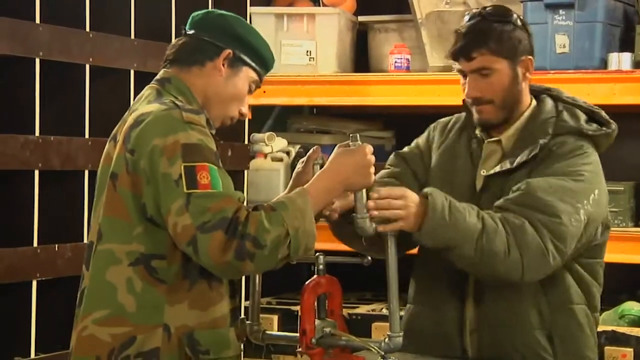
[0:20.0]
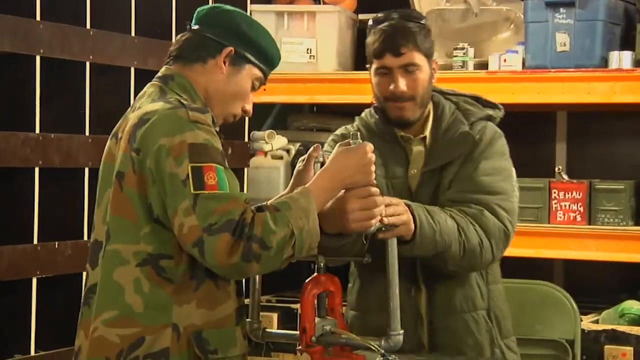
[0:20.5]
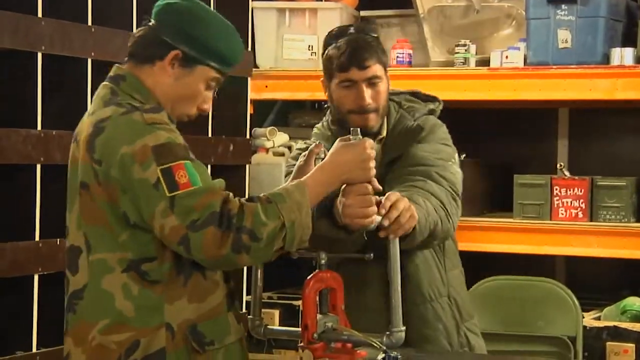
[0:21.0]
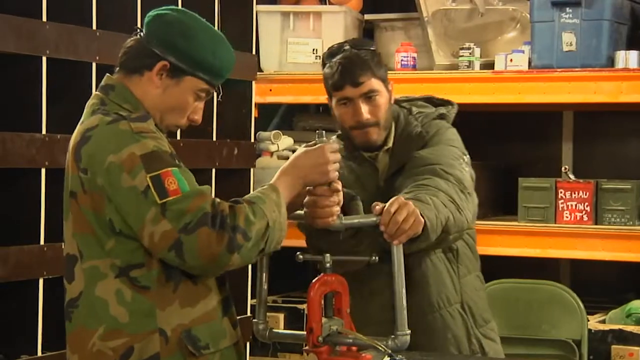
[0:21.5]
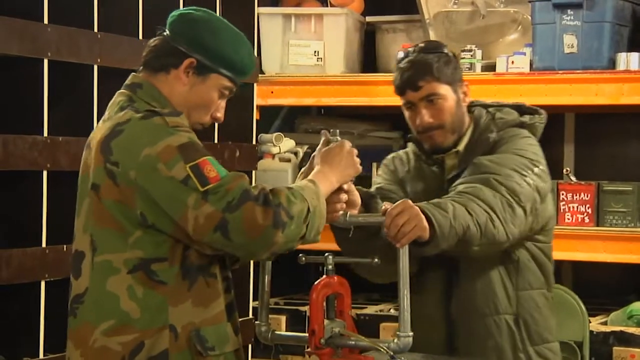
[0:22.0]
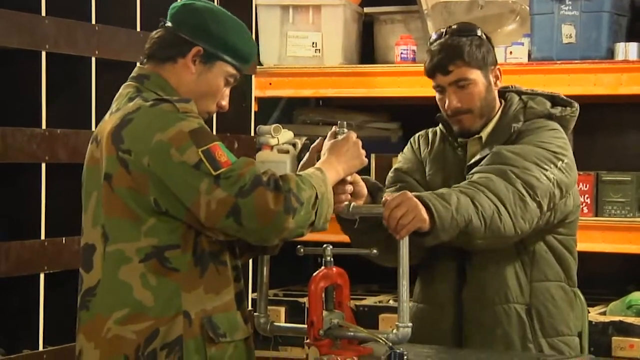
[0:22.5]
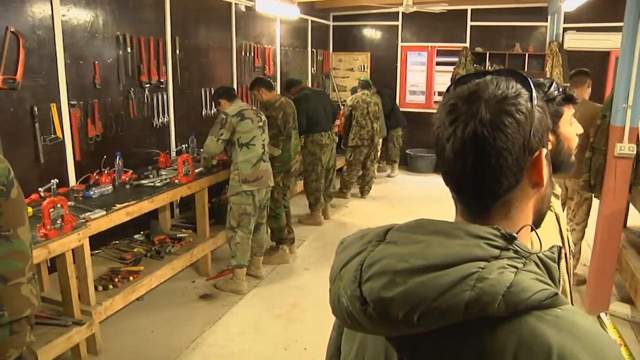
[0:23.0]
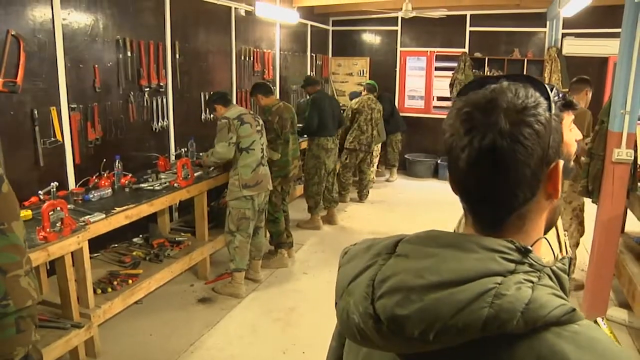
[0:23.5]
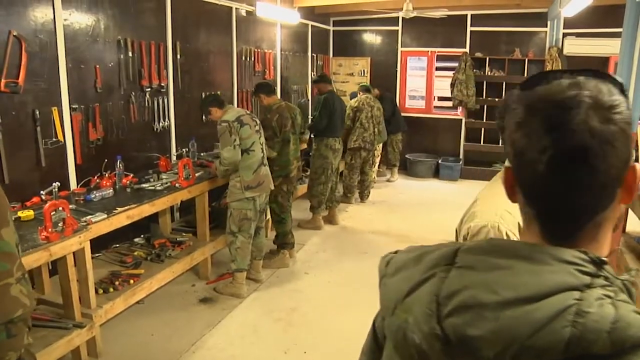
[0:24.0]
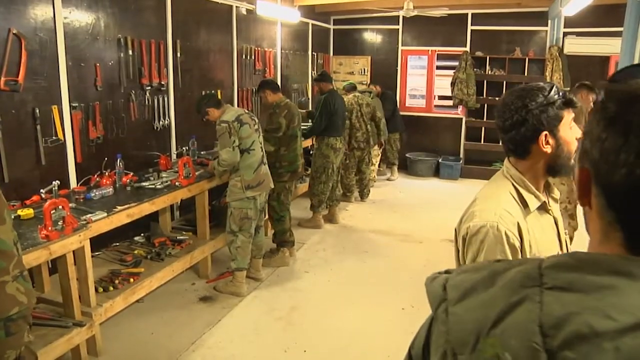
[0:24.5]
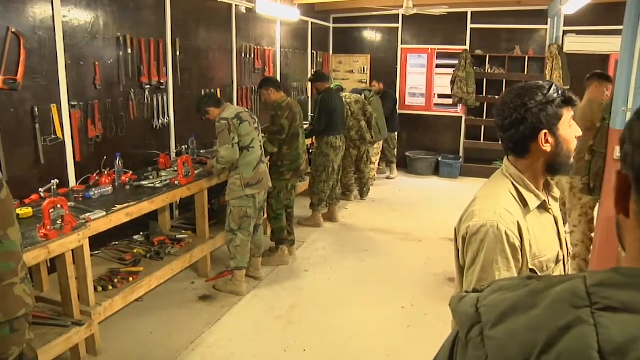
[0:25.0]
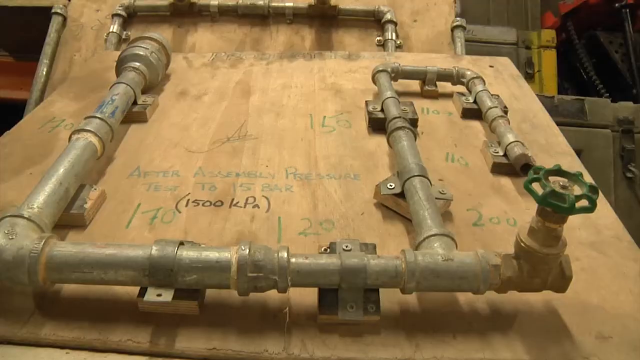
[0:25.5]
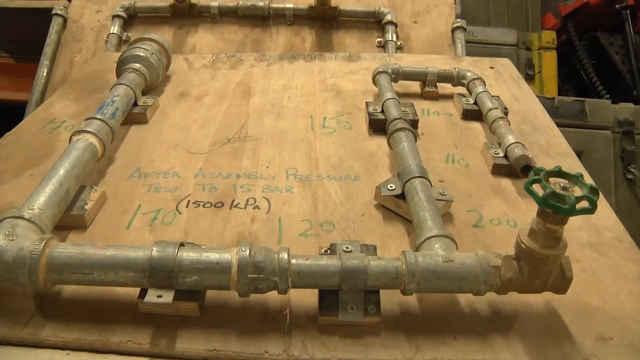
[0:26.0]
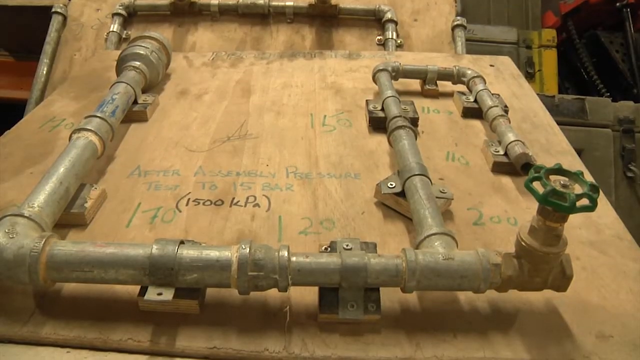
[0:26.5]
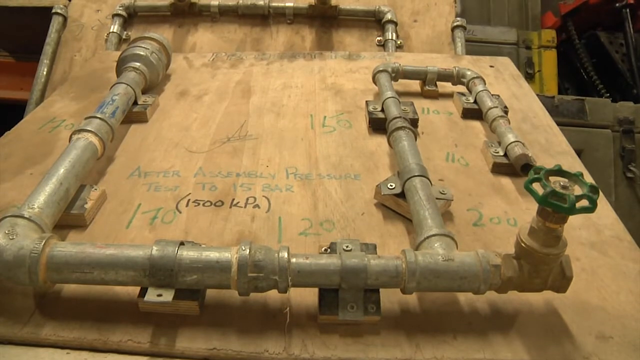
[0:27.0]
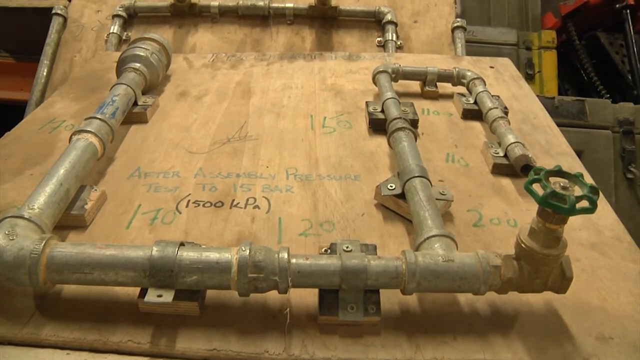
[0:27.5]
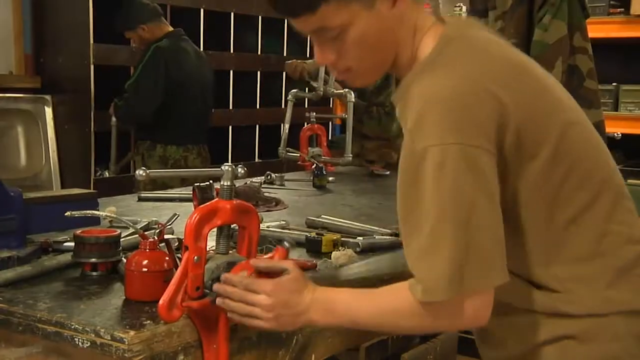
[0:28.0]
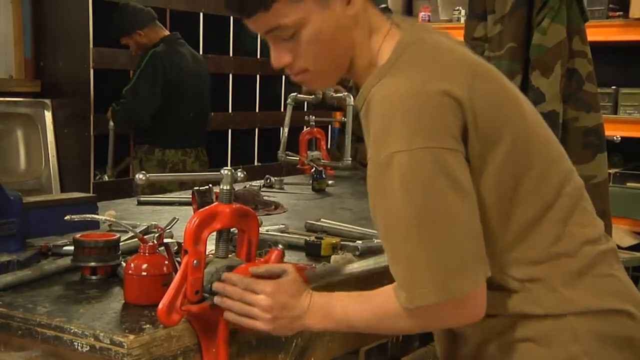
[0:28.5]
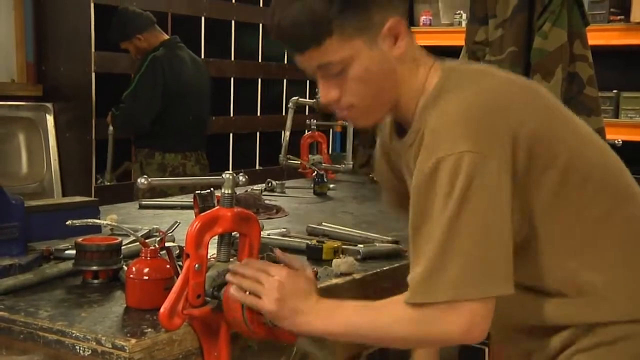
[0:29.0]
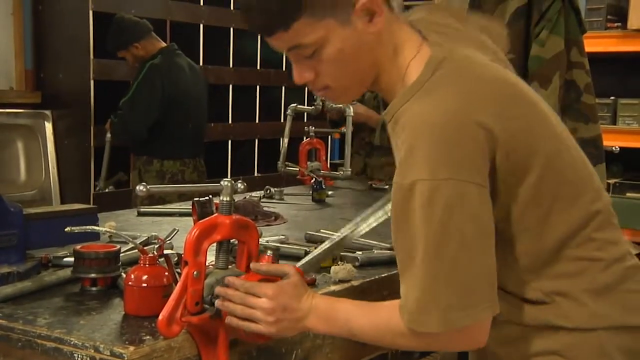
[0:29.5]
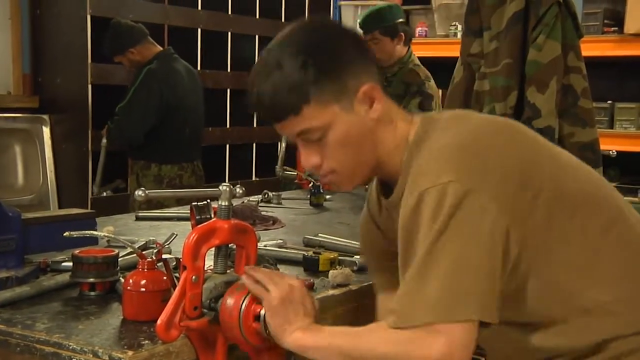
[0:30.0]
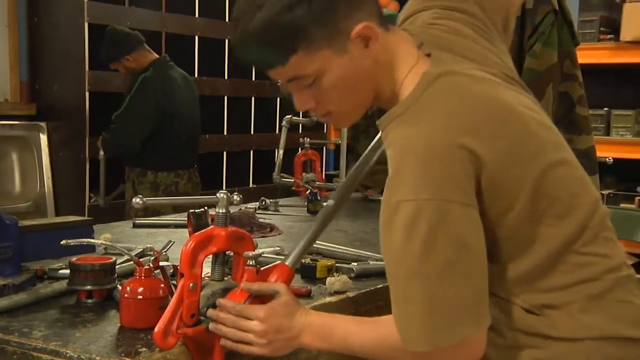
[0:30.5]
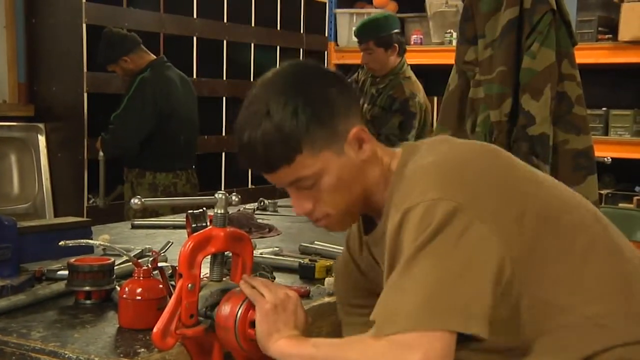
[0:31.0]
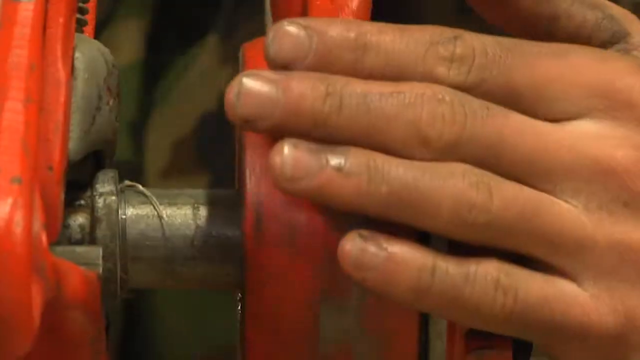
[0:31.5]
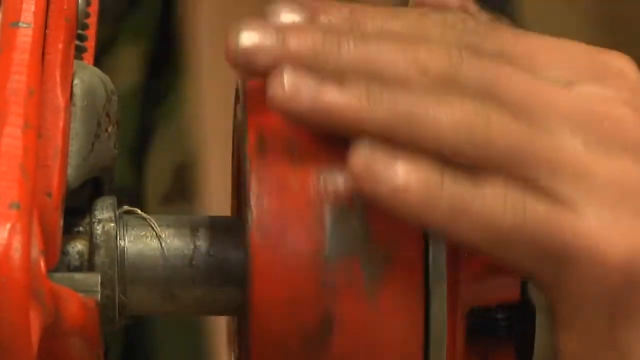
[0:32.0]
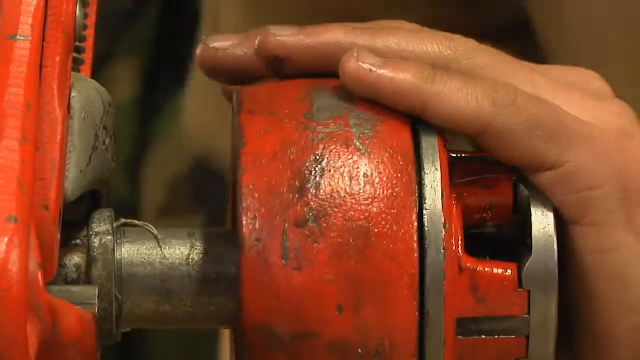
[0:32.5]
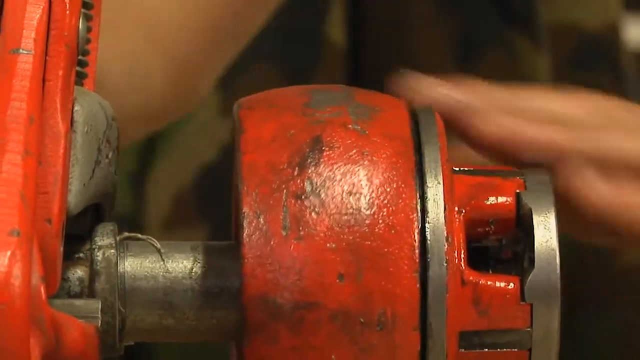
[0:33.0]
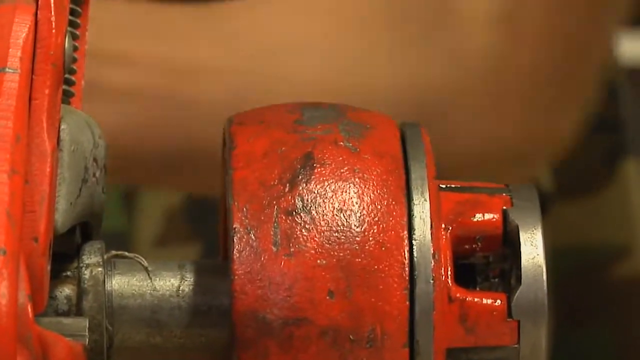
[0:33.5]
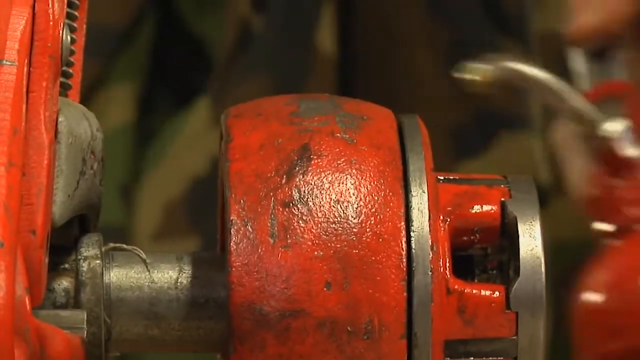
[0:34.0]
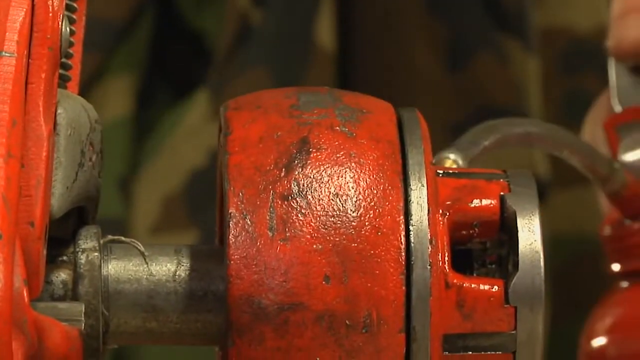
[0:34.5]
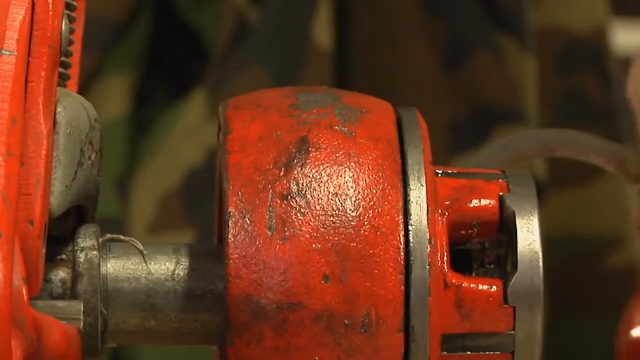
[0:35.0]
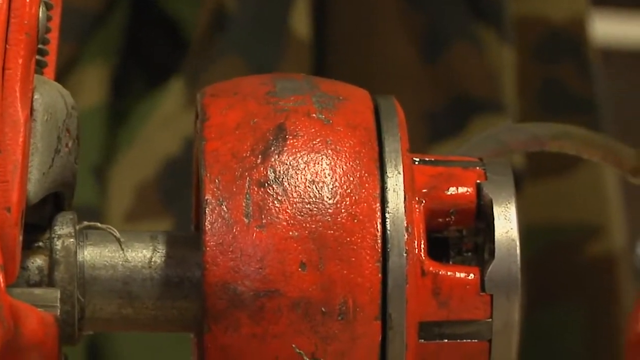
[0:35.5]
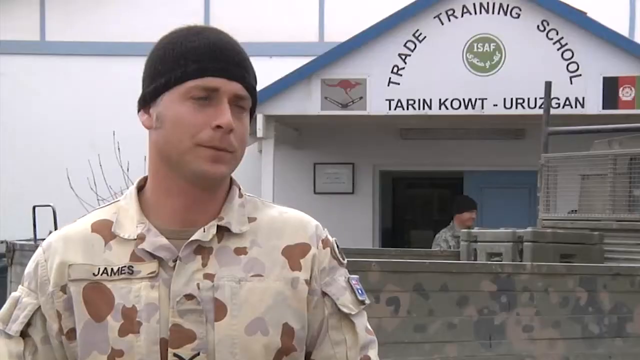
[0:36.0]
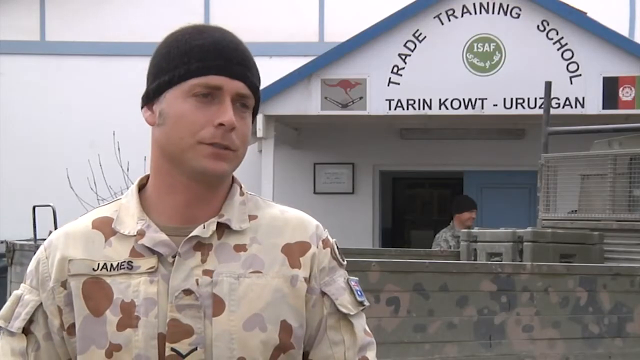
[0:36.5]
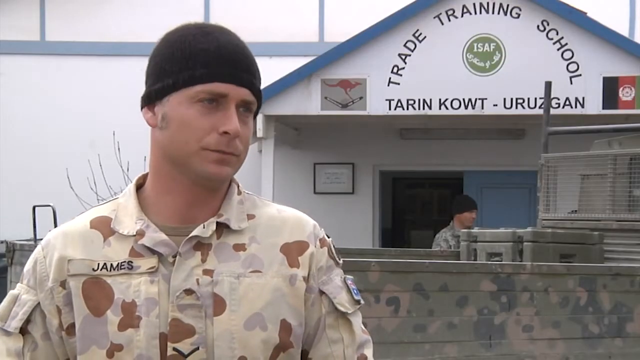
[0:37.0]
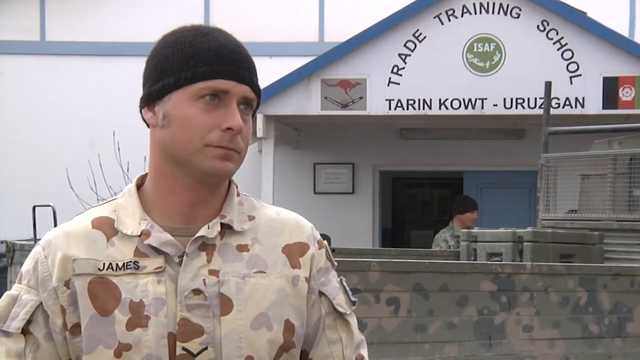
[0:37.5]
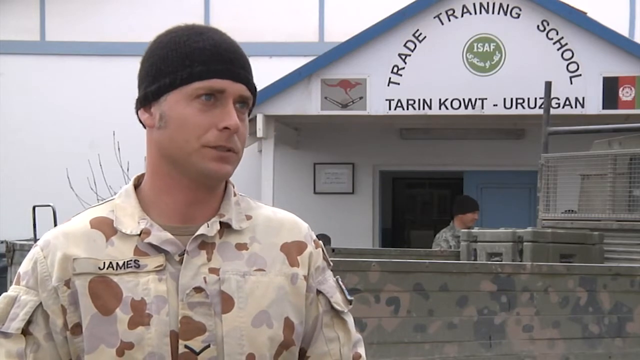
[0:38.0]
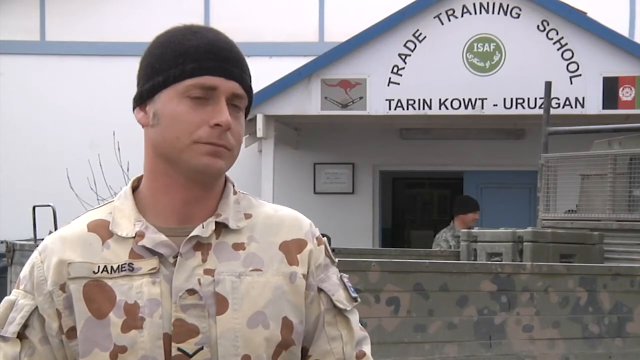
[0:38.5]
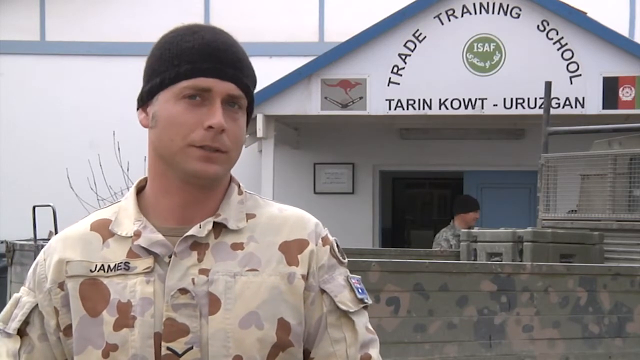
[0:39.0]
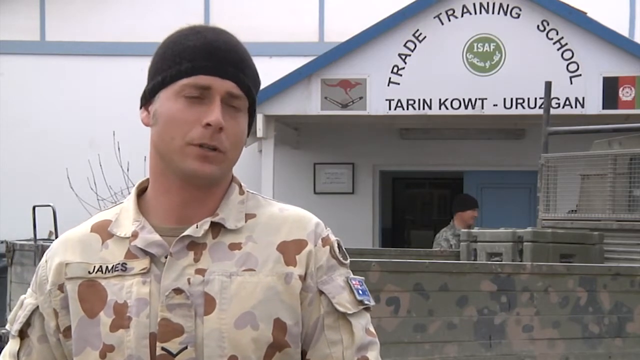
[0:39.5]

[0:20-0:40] Two uniformed men seem to be working on a metal pipe assembly. The man on the right, wearing a puffy green jacket over his uniform, helps the man on the left, who wears a green camouflage top and a green beret, twist the pipe assembly toward the left. The video cuts to an overall view of a workroom where multiple uniformed soldiers seem to be setting up various pipe assemblies and workstations at workbenches, with large tool racks placed throughout the room. Next comes a close-up of a pipe assembly with a green valve on its bottom right corner. The footage then cuts to a man in a brown military undershirt using a large red plumbing wrench in his right hand, twisting downward with the force of the handle on a pipe assembly that is placed in a large red clamp attached to a workbench.